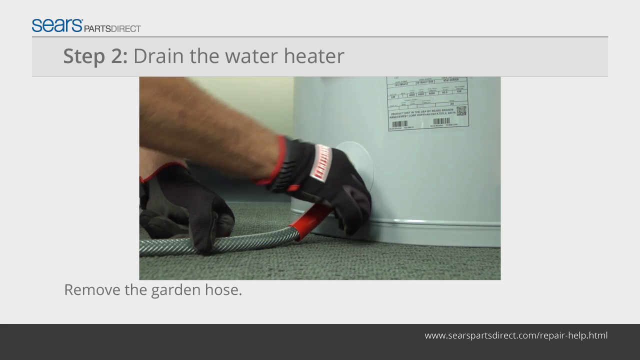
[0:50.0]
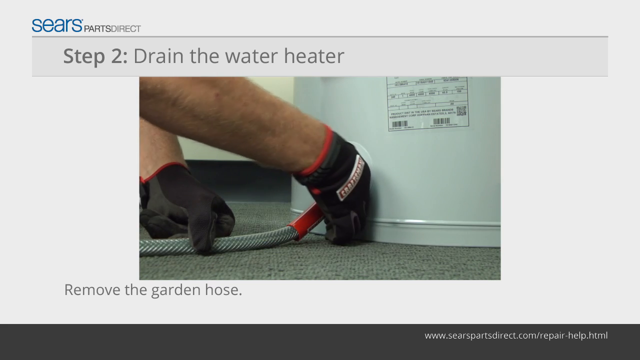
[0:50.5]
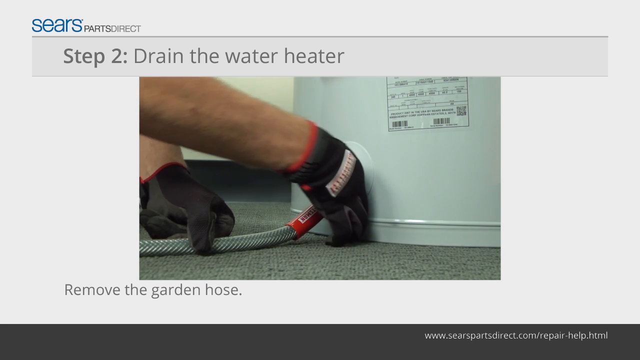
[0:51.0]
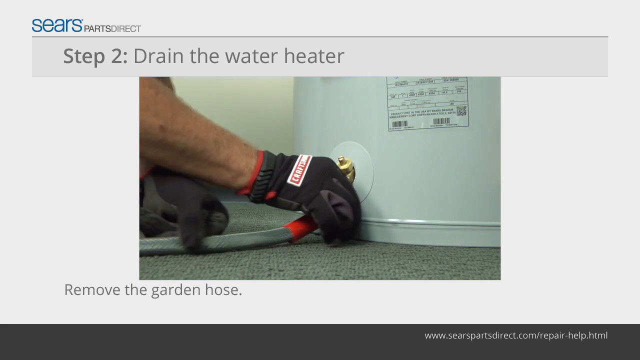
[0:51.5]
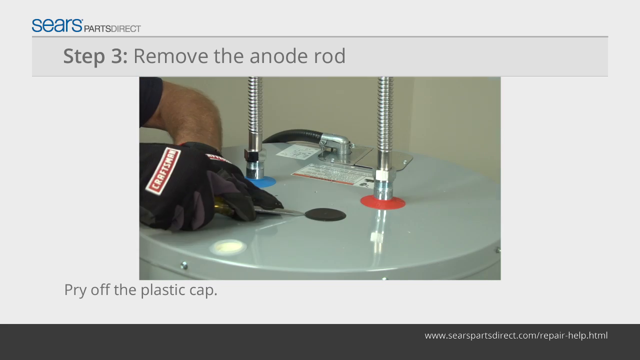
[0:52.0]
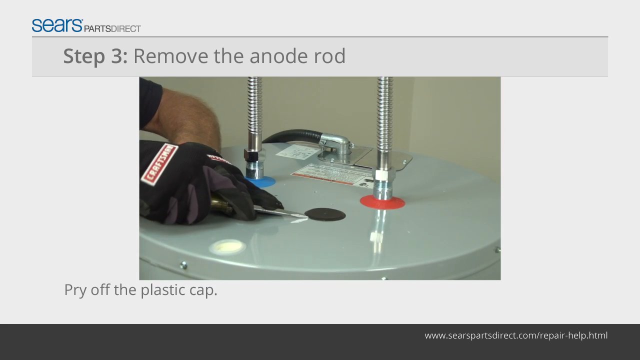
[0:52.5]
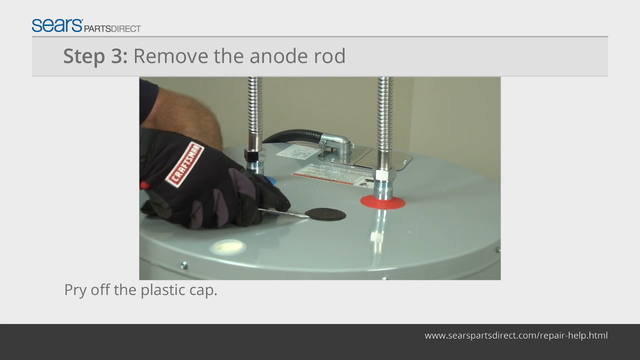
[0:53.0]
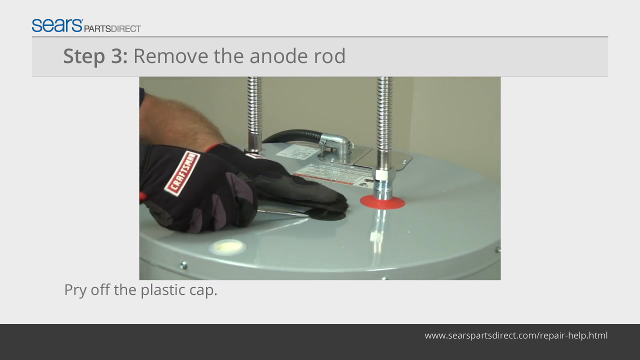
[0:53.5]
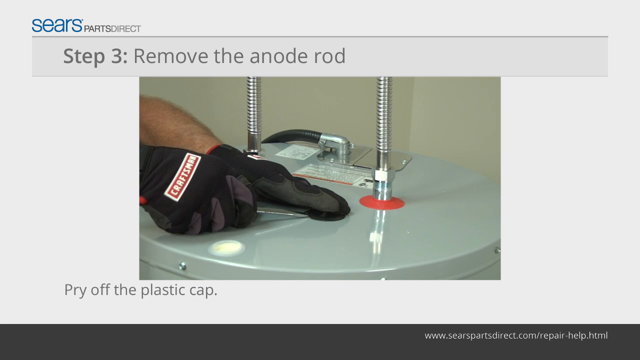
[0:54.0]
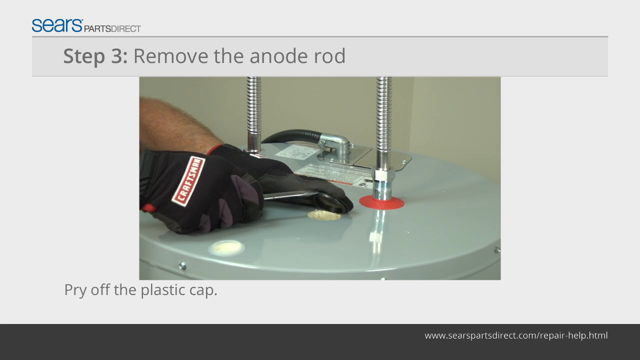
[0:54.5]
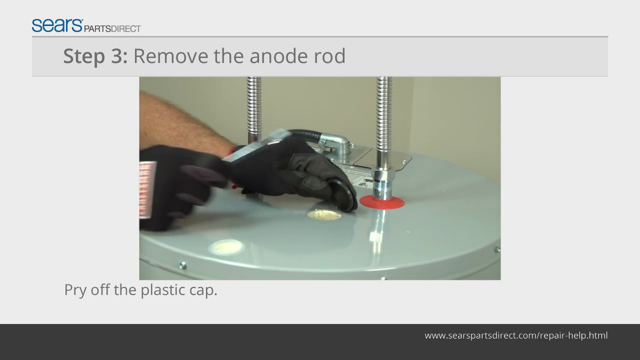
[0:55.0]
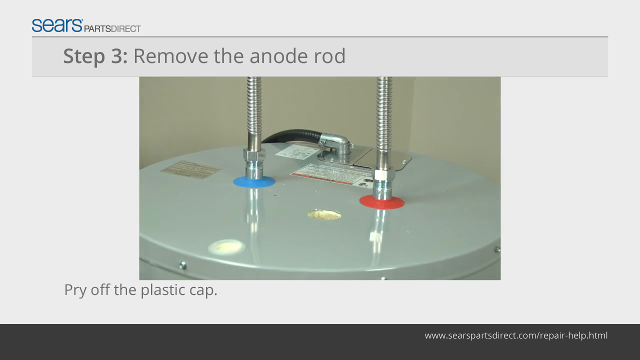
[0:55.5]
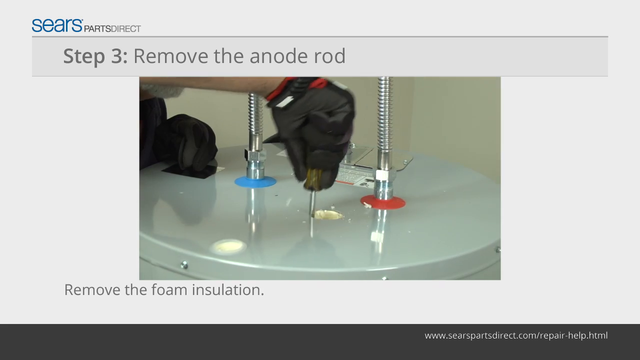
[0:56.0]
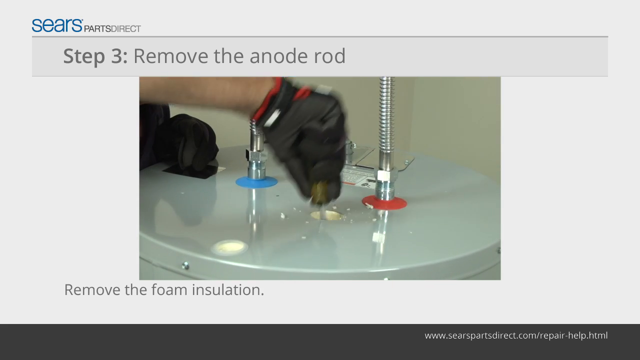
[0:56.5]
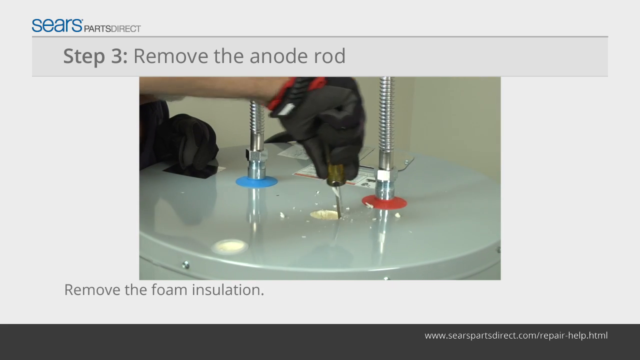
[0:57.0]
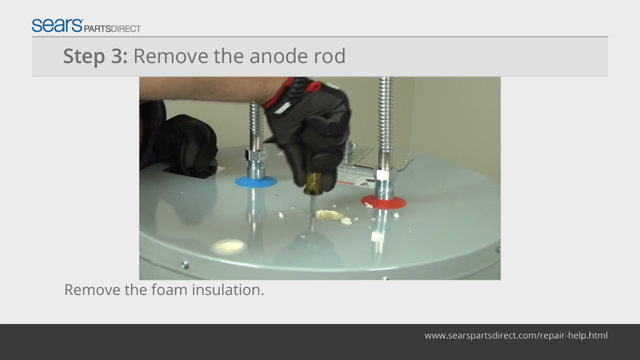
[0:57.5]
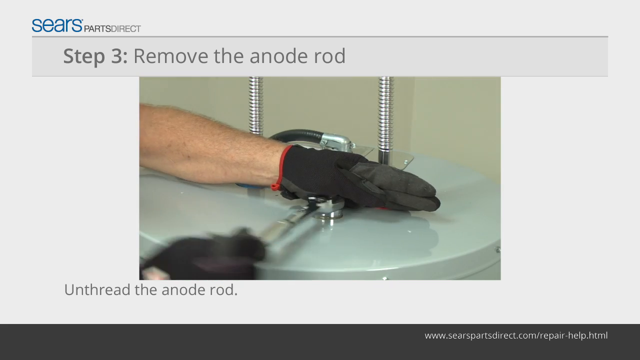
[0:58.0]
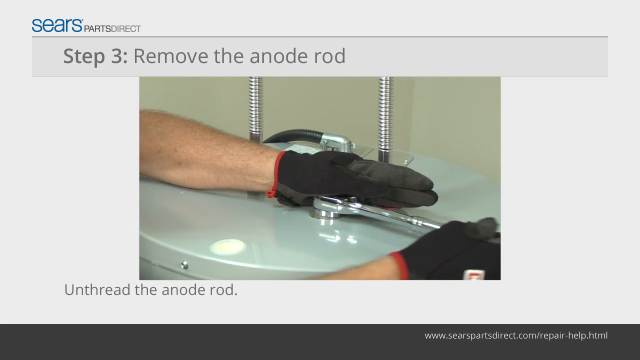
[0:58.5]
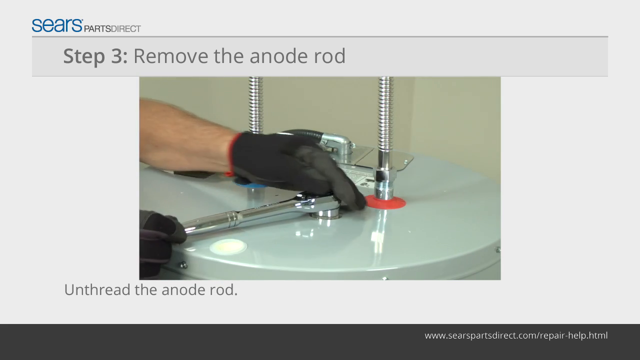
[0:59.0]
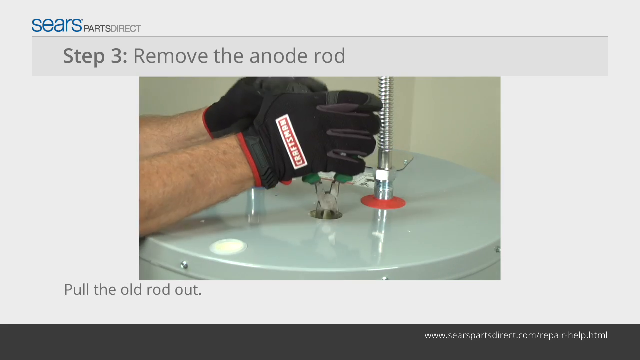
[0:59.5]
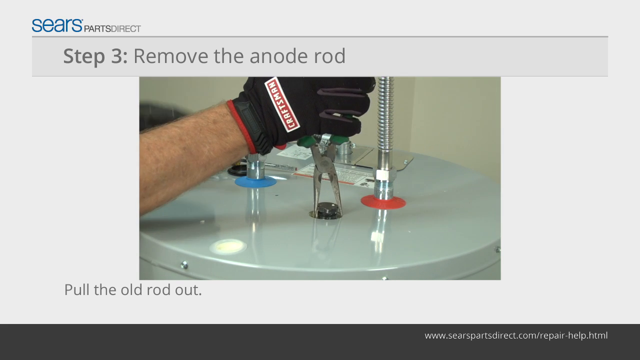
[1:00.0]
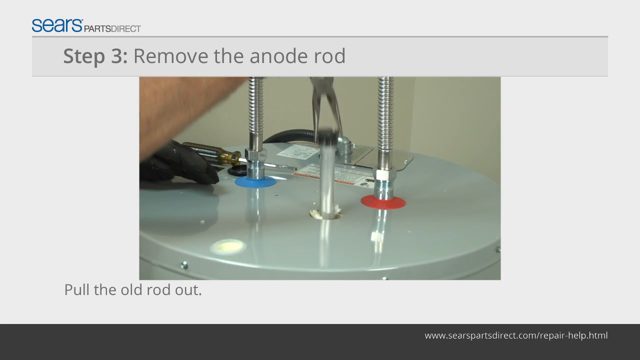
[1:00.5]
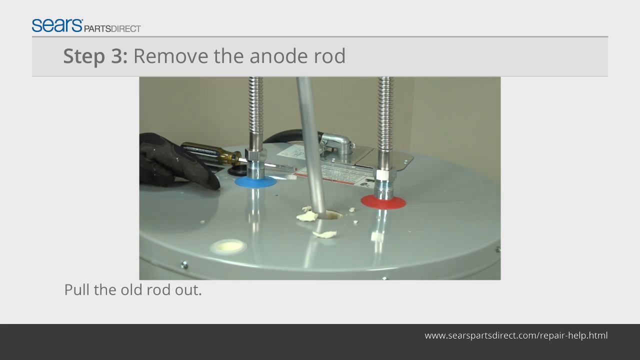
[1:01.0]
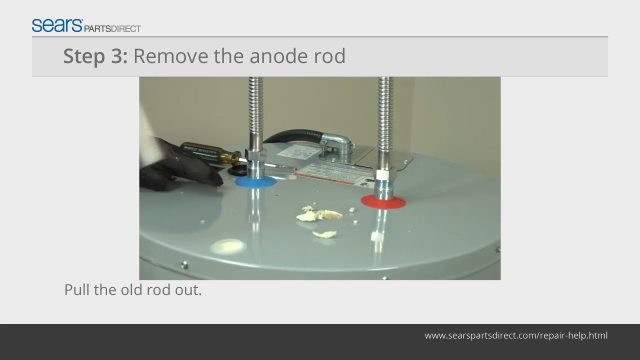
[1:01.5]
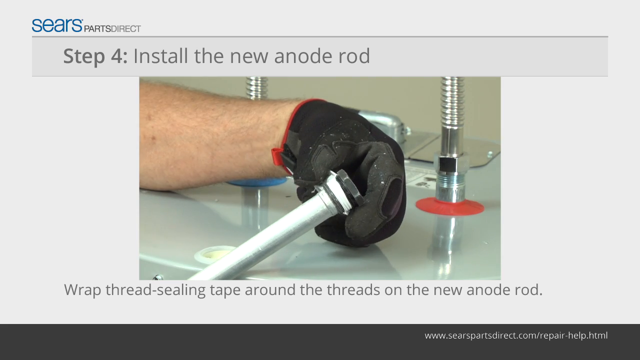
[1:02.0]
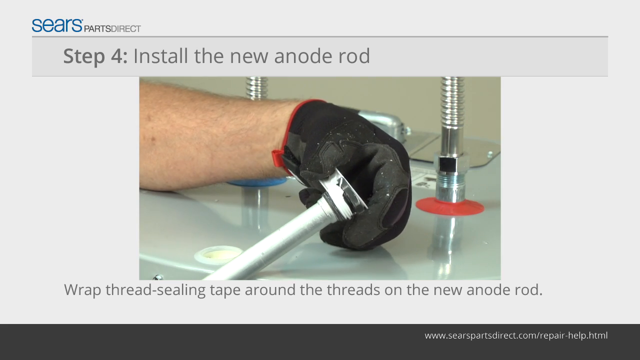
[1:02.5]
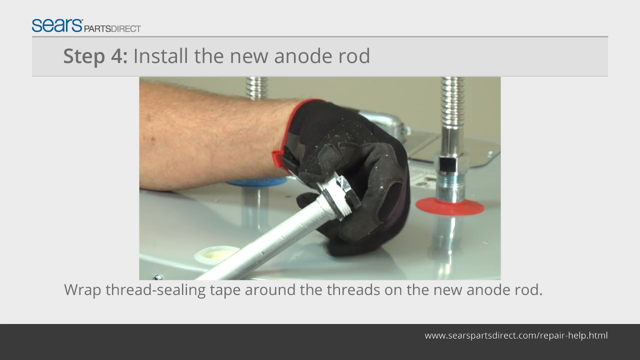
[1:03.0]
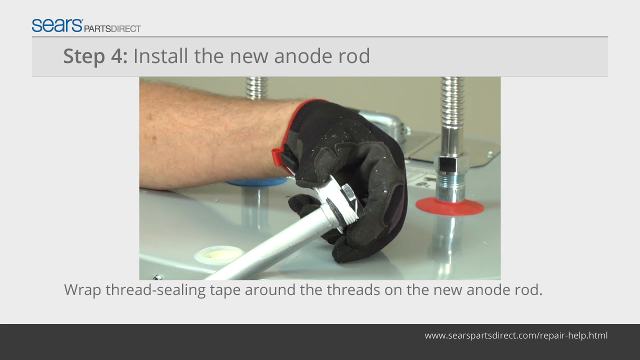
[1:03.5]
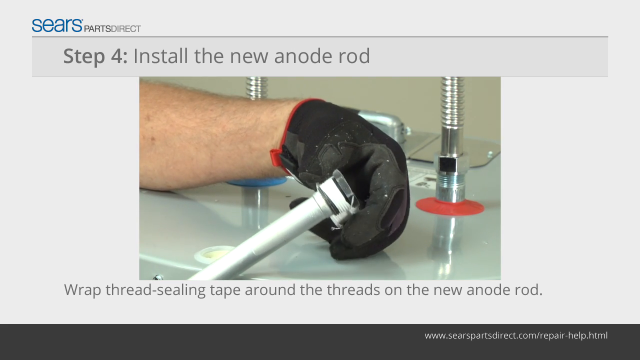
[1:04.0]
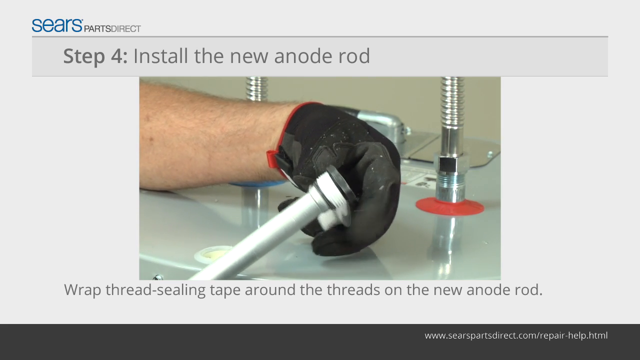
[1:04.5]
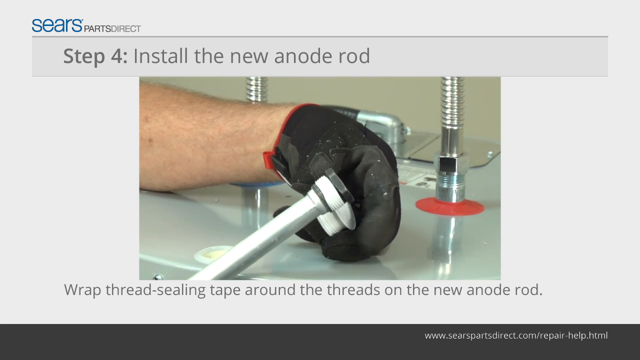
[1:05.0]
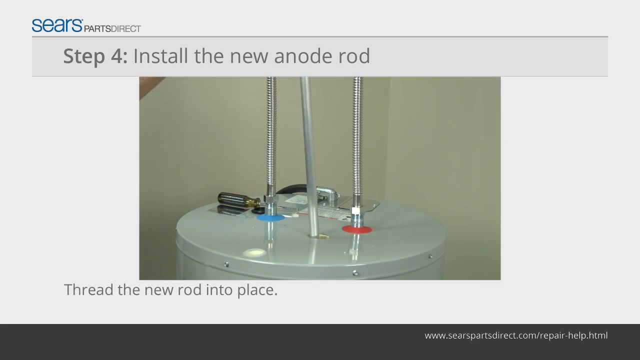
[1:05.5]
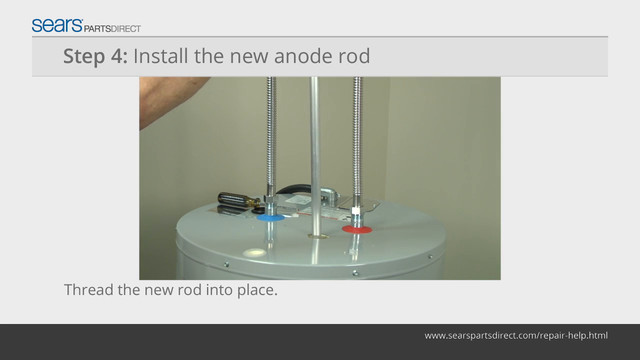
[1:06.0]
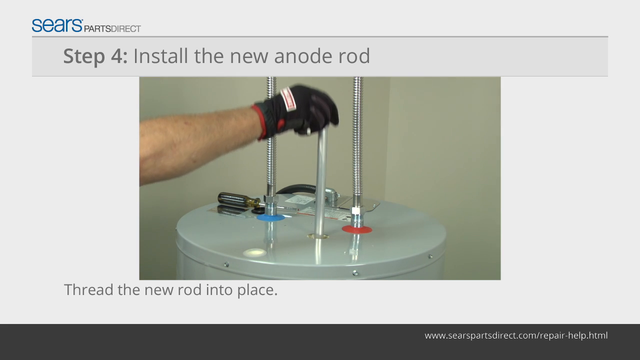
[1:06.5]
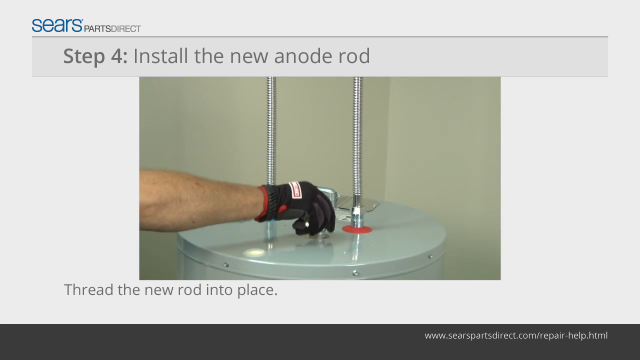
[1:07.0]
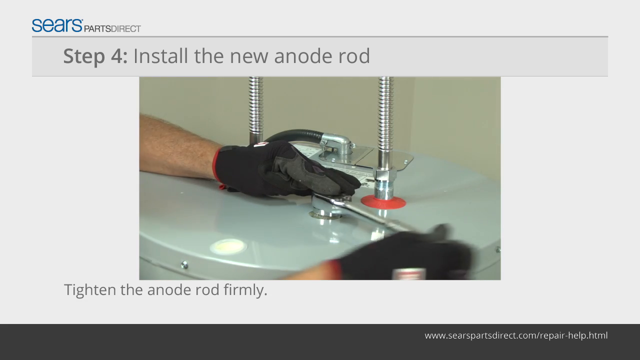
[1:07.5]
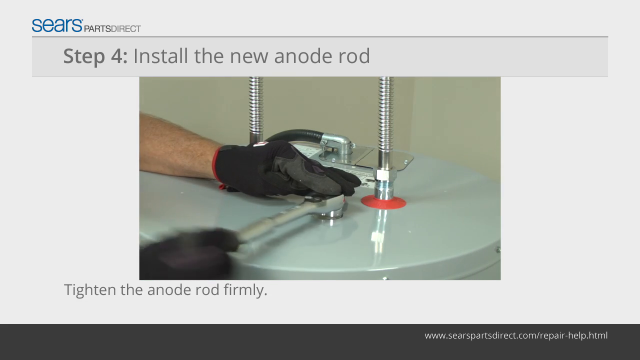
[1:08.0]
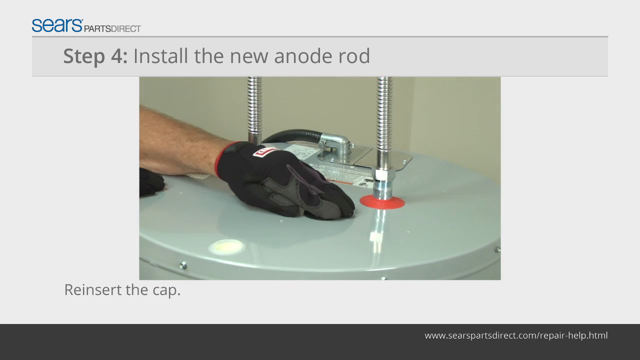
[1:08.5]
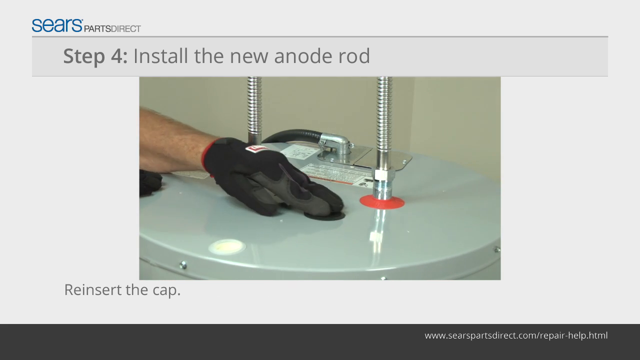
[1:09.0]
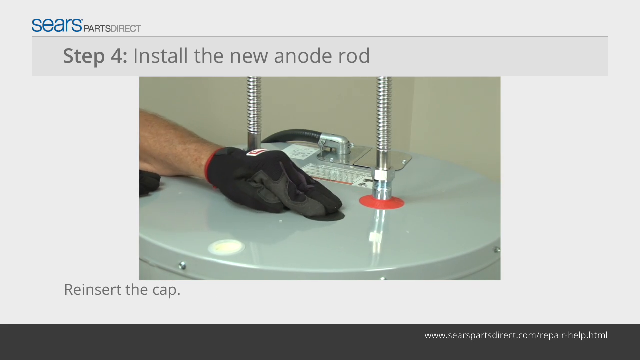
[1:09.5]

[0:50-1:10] Still in step two, with the same gray background and Sears Parts Direct font, a picture shows a person in gloves removing the garden hose from the water heater after the water has drained and the valve has been screwed back in. Step three is removing the anode rod, again with the same background and Sears Parts Direct at the top. A picture says "pry off the plastic cup": on top of the water heater is a black plastic cup, and the gloved person pries it off with a screwdriver. With the cup removed, the same screwdriver is put into the hole underneath and used to remove the foam insulation. Then what looks like a wrench, apparently the socket wrench, is put into the hole and moved to loosen the anode rod, and pliers are used to pull the rod out. The anode rod is a silver rod and comes right out. Next the new anode rod is installed: thread sealing tape is wrapped around the threads at the top of the rod, which is a silver part with a black, almost cap-like top. The rod is put back into the hole with the pliers, screwed back in with the socket wrench, and the cap is put back on.